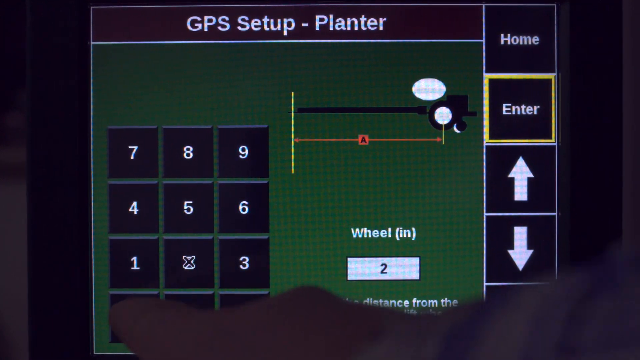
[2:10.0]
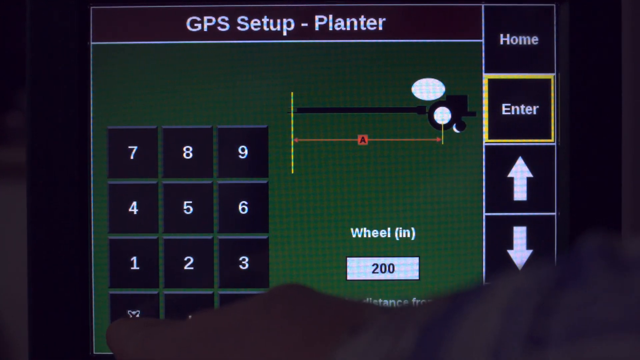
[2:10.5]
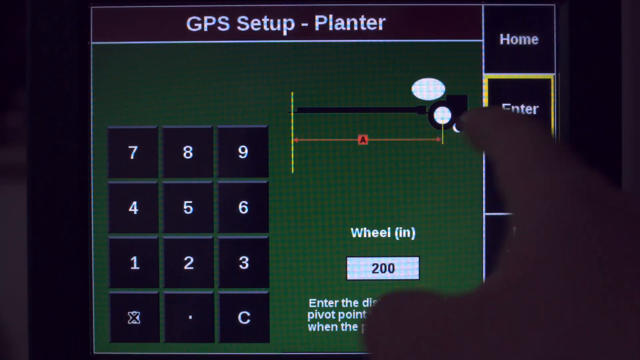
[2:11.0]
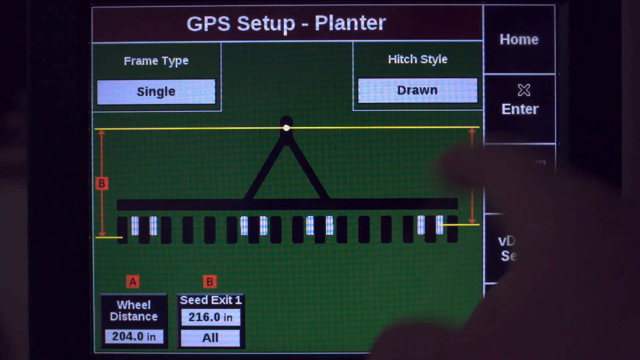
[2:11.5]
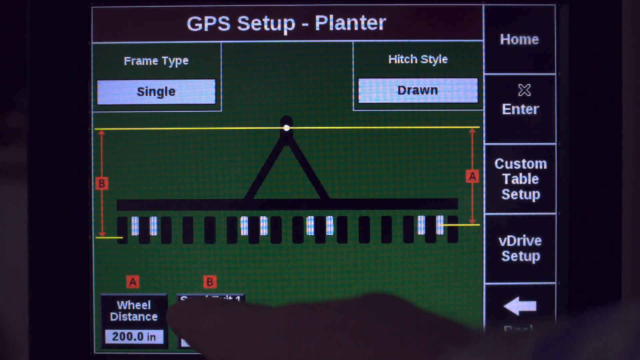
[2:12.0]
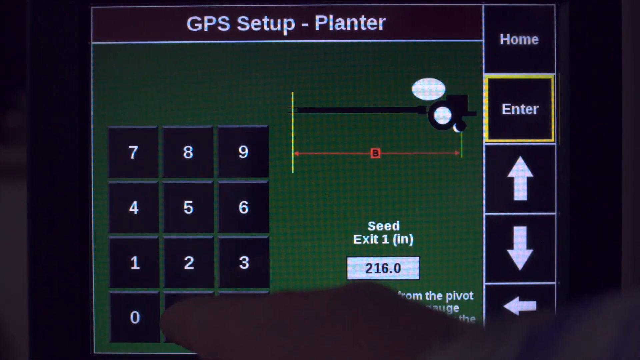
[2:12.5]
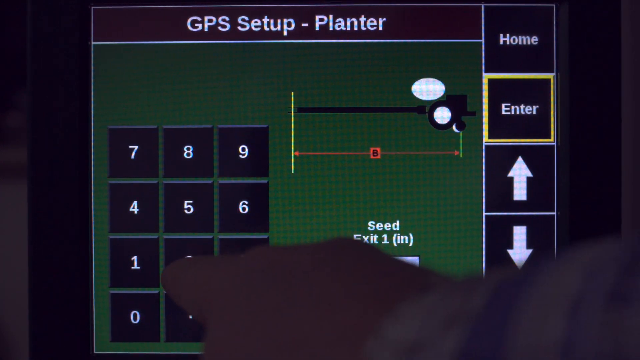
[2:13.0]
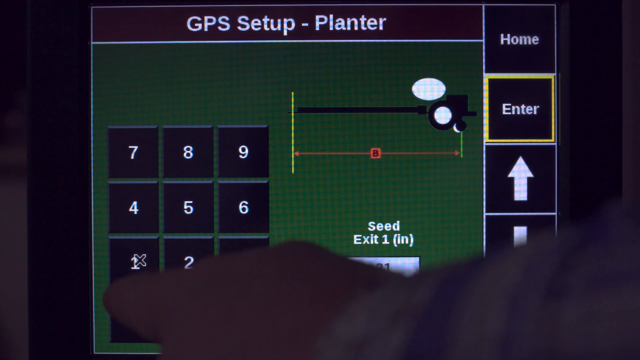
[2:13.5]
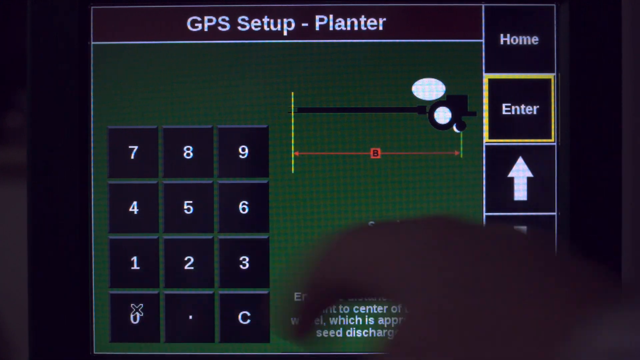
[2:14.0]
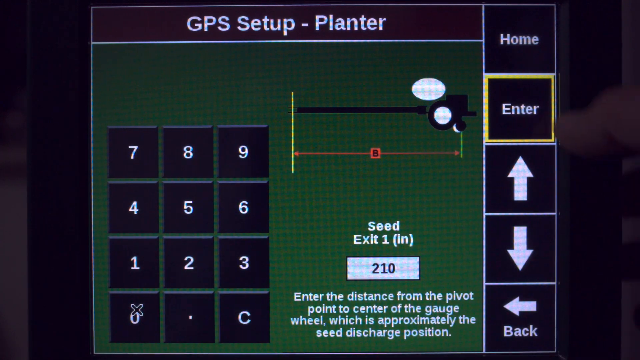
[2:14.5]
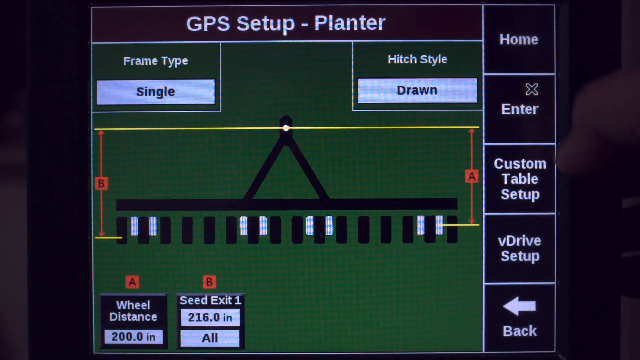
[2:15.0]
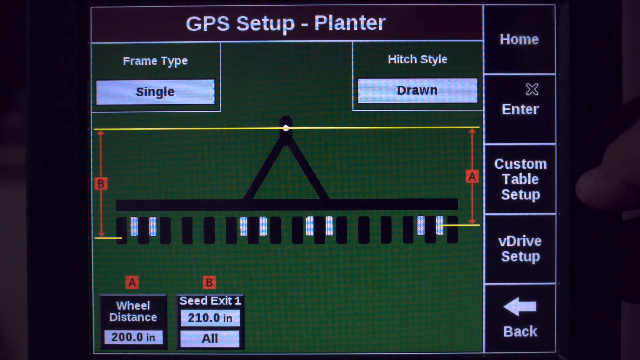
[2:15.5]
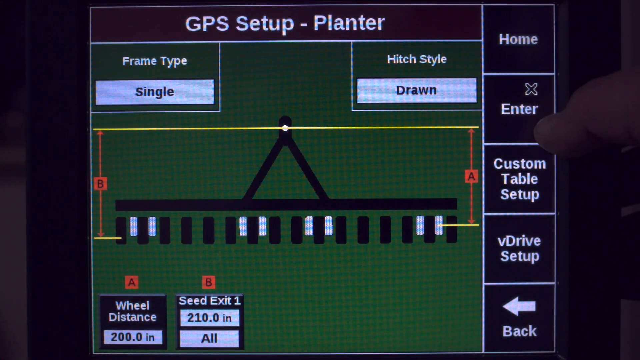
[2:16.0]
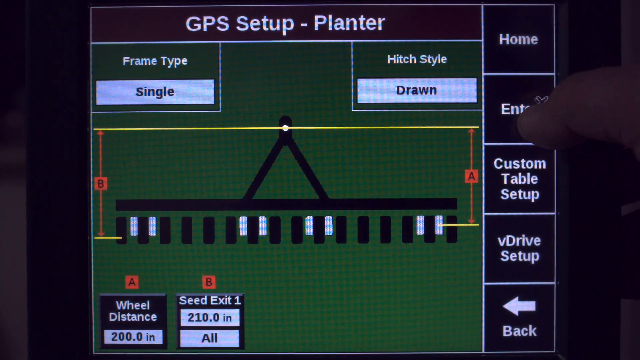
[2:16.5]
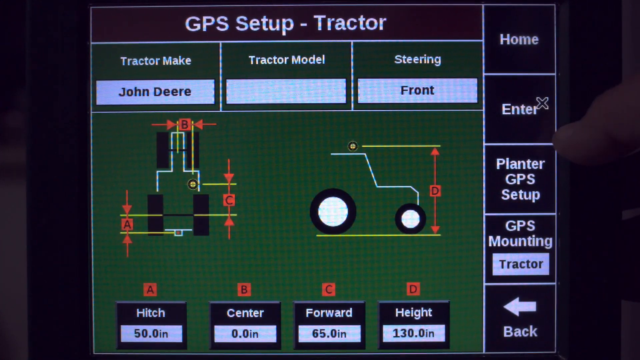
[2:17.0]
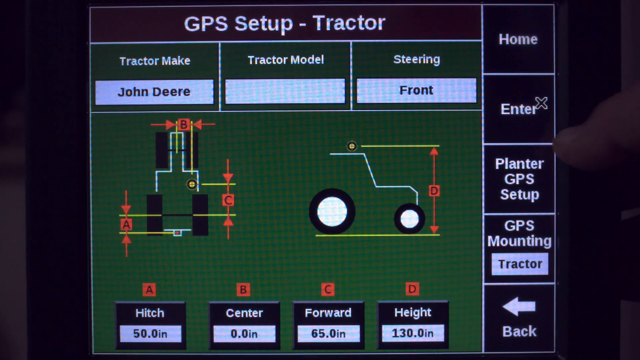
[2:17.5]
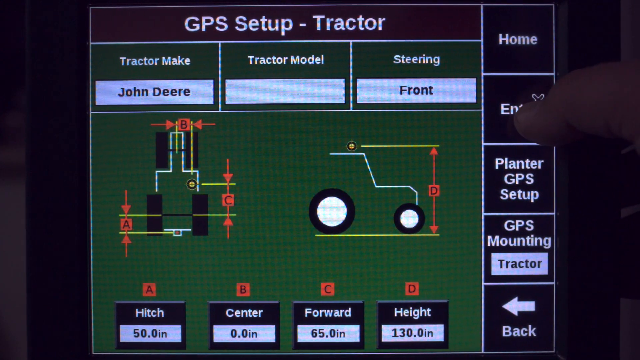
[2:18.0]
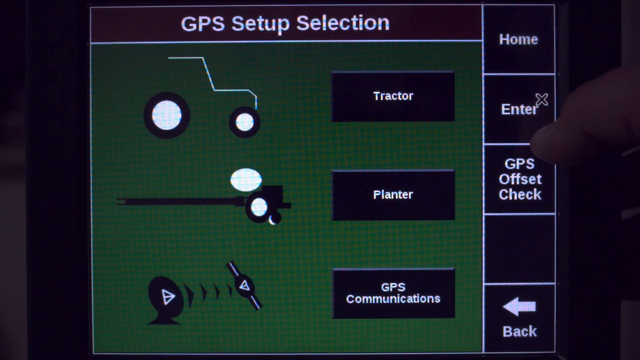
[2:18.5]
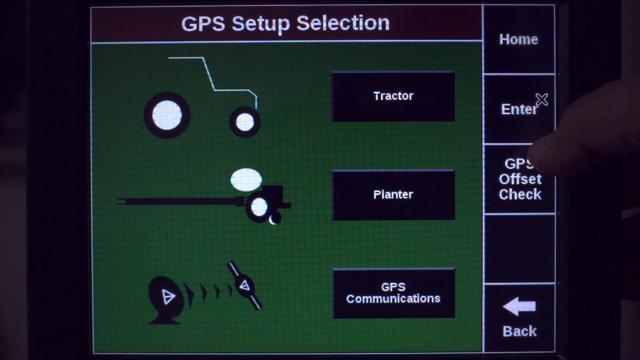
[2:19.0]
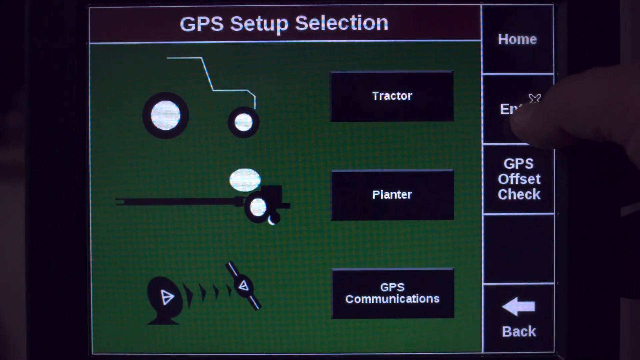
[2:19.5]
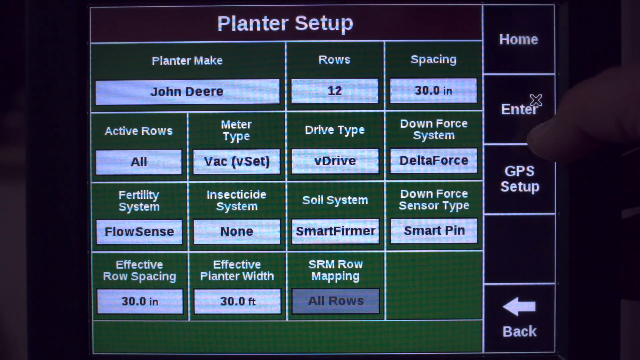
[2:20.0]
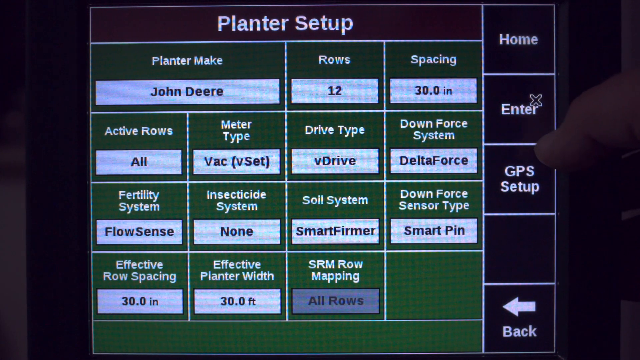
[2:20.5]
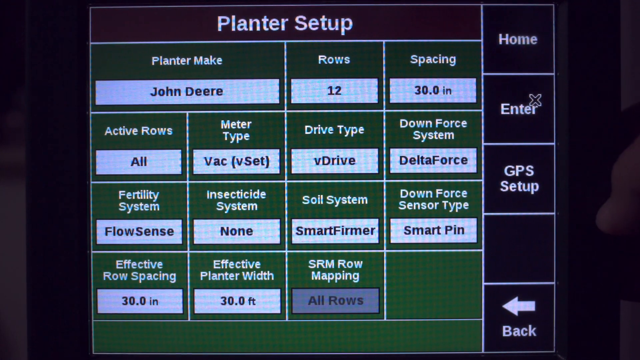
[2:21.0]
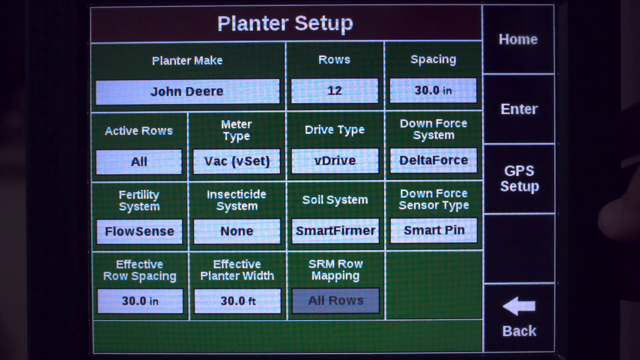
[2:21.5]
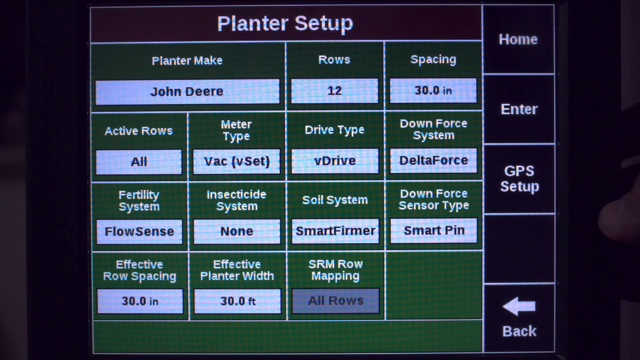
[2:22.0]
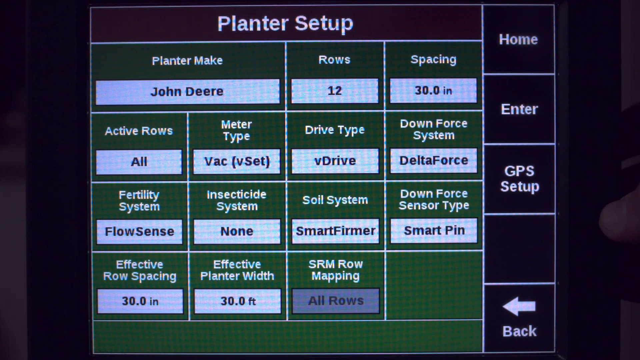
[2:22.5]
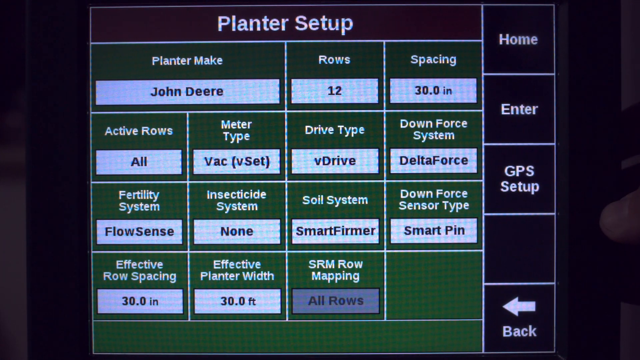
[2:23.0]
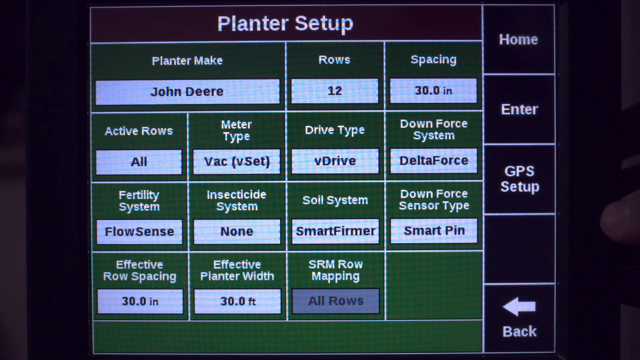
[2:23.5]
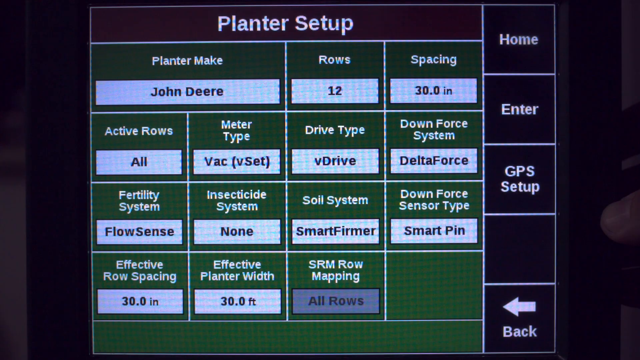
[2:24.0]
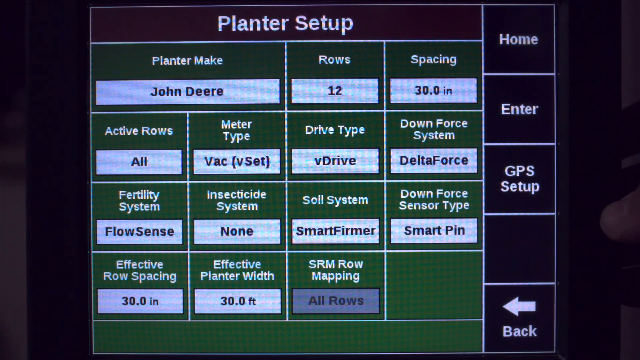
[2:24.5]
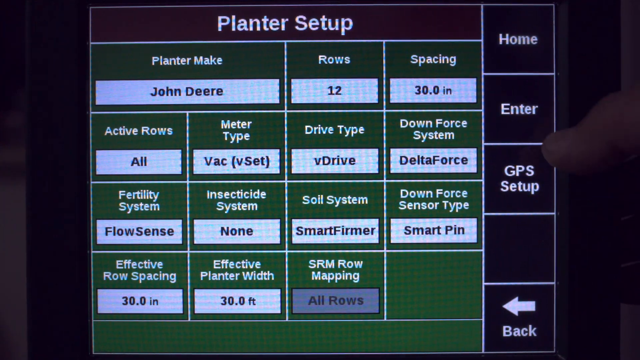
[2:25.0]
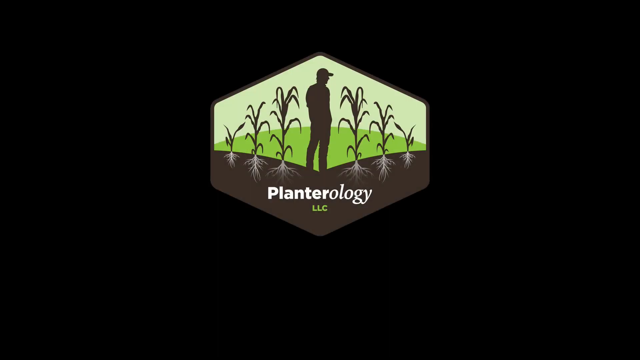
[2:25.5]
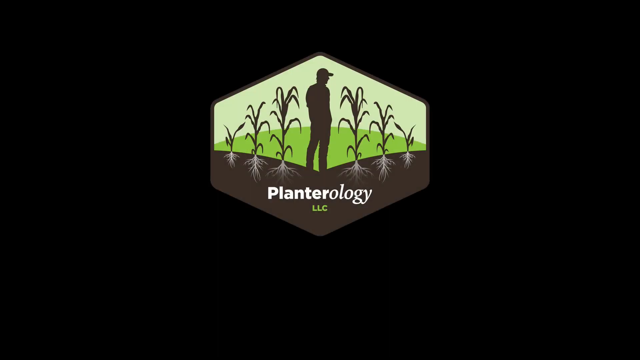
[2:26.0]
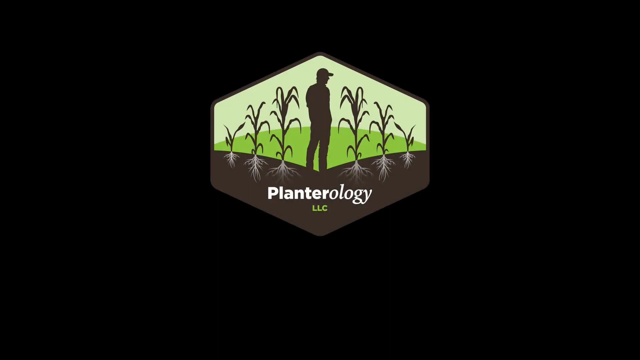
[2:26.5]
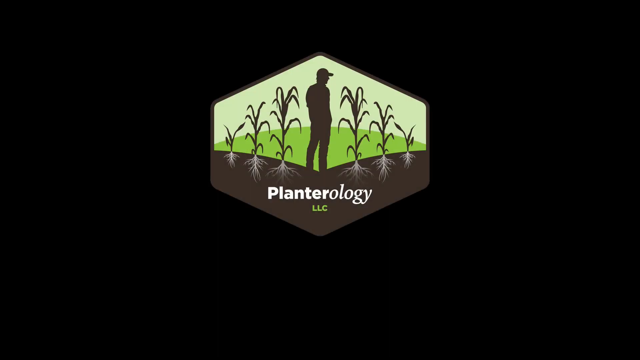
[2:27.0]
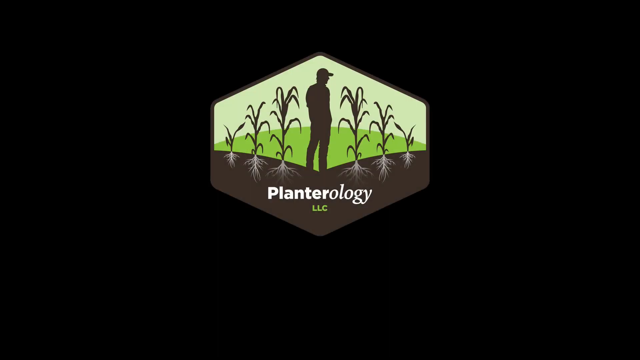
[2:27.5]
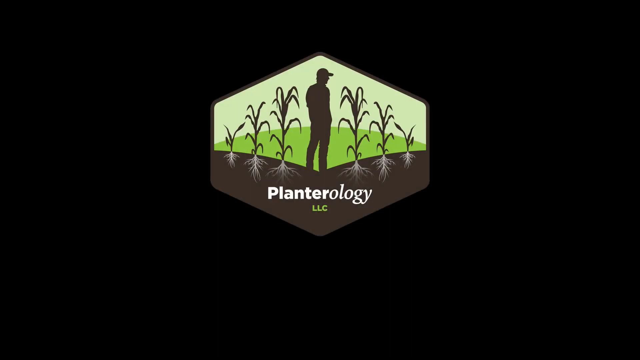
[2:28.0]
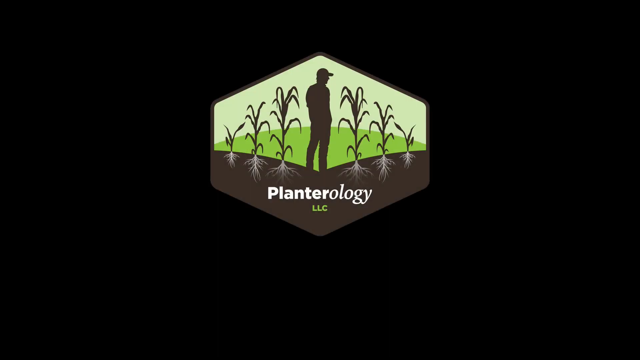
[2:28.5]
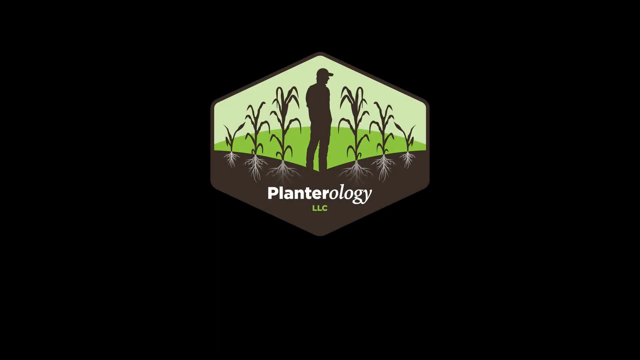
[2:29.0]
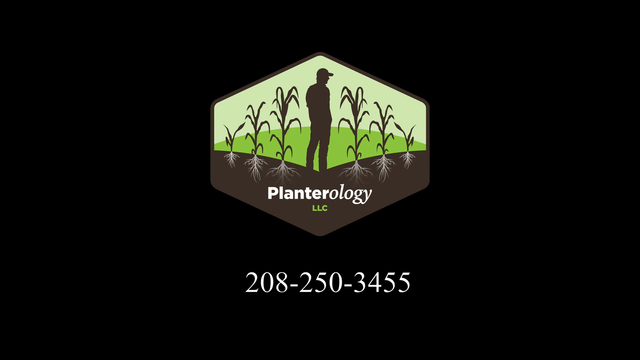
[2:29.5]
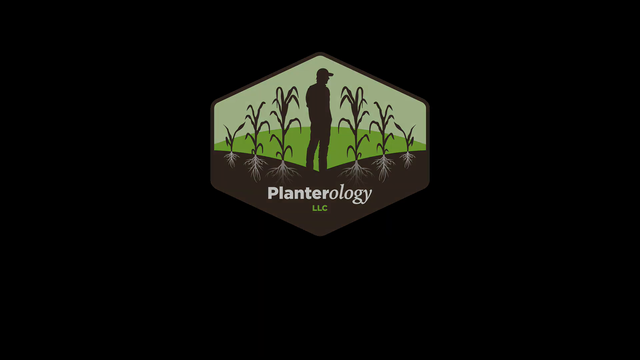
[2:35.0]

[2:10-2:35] The farming program shows "GPS setup - planter" at the top. A picture diagram of a planter is kind of toward the middle but leading toward the right at the top: the planter is a long black rectangle with a white circle and a white oval, and a long letter A is stretched horizontally across that section. In the upper right corner there is a home square, below it a square that says enter surrounded by a yellow box, then an arrow pointing up, and further down an arrow pointing down; later an arrow pointing right appears. A number grid shows 7, 8, 9 in the top row, 4, 5, 6 in the middle row and 1, 2, 3 in the bottom row. The person clicks on different areas. At the end, an emblem in a hexagon shows a silhouette of a farmer and a farm field, with the text "planterology LLC". Then the phone number 208-250-3455 appears, and everything fades out to a black screen.